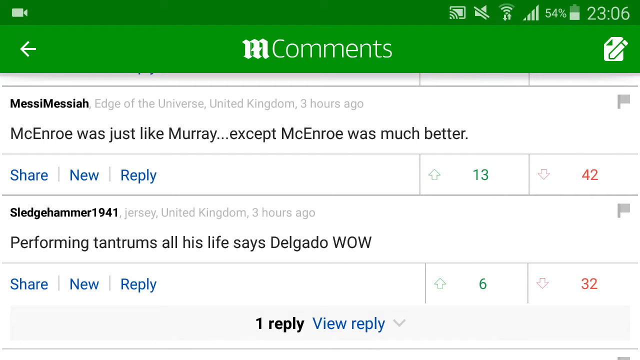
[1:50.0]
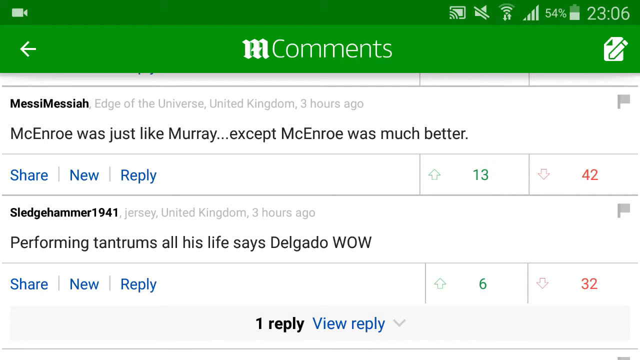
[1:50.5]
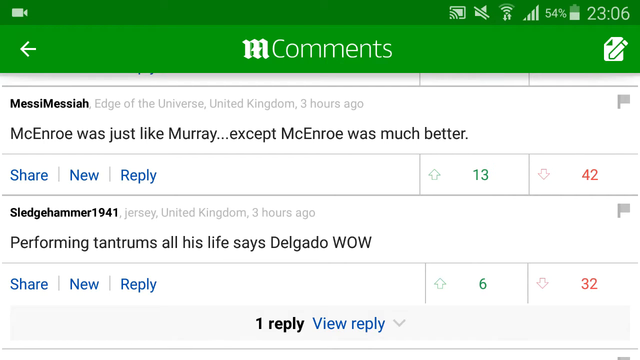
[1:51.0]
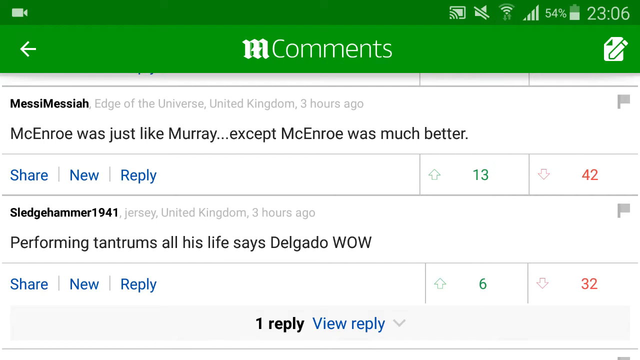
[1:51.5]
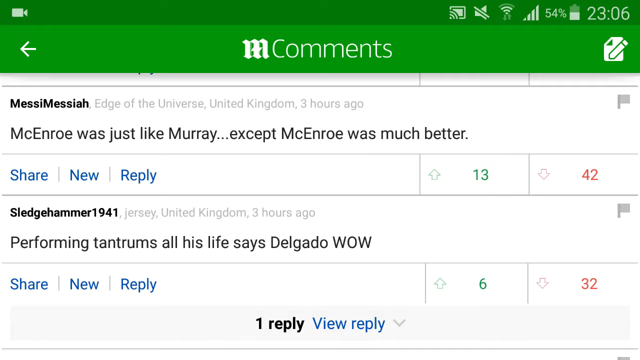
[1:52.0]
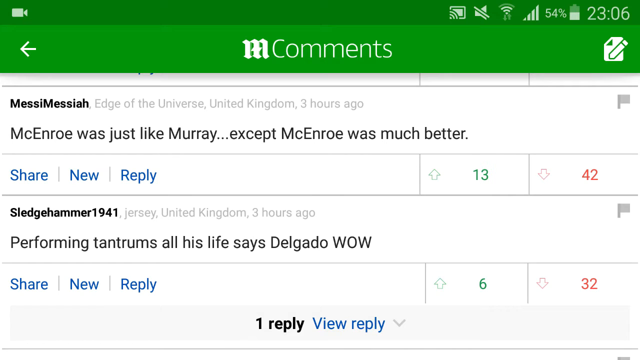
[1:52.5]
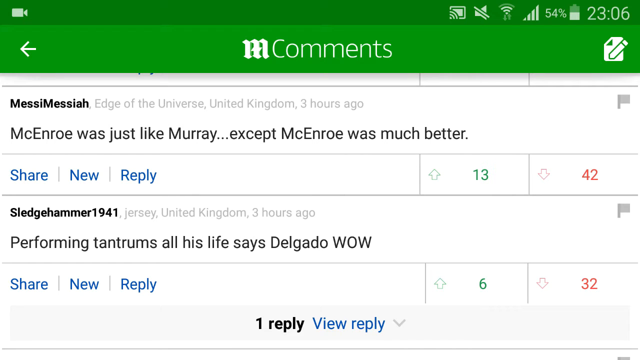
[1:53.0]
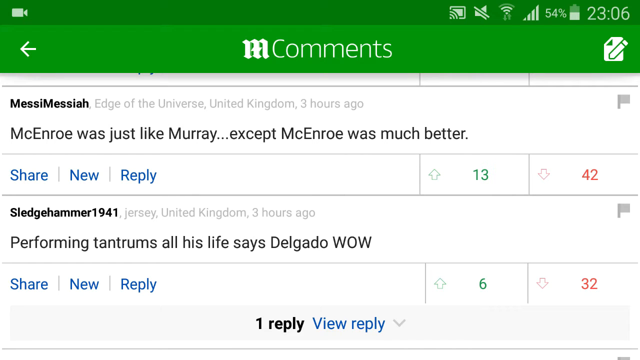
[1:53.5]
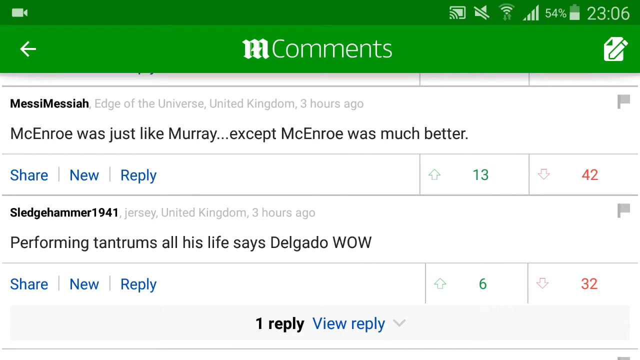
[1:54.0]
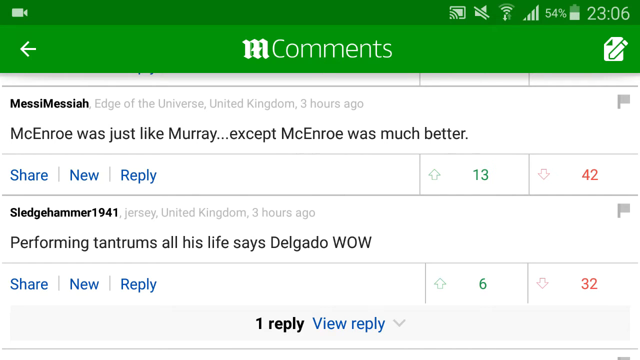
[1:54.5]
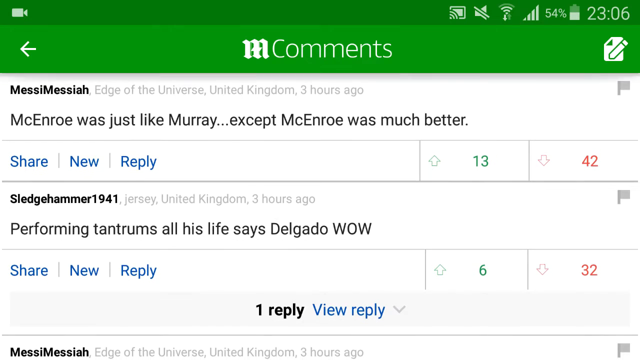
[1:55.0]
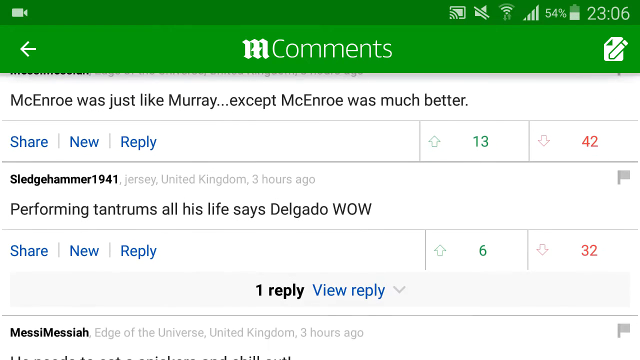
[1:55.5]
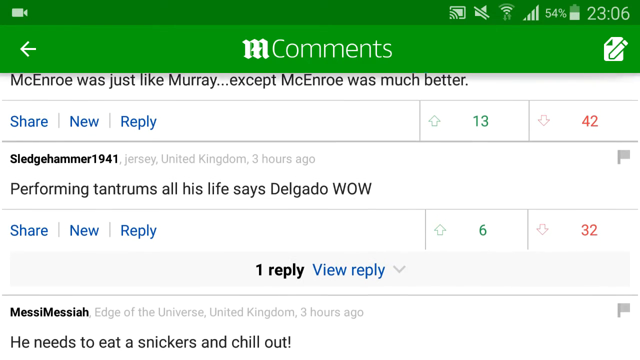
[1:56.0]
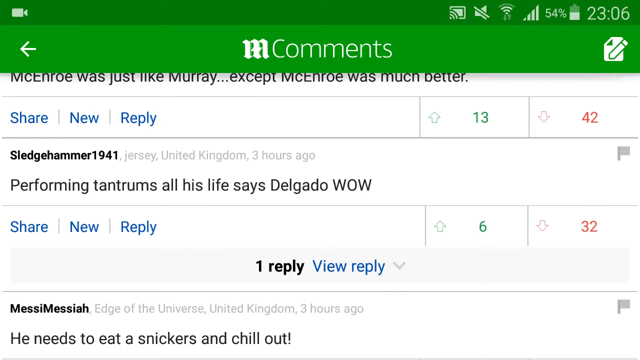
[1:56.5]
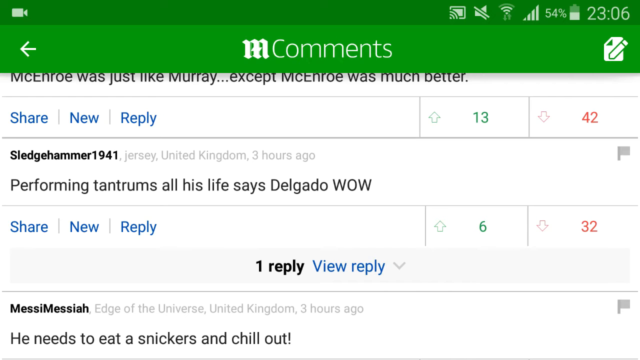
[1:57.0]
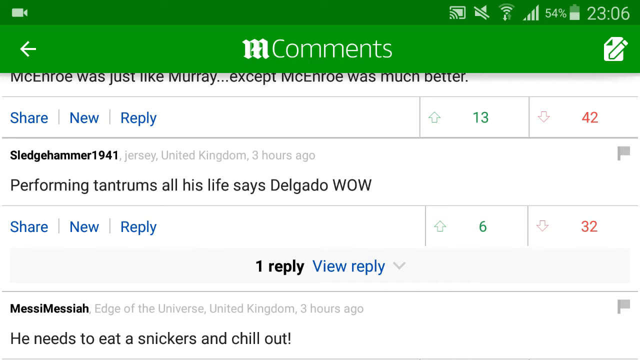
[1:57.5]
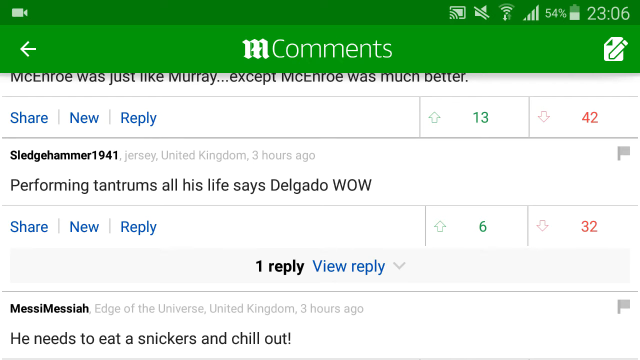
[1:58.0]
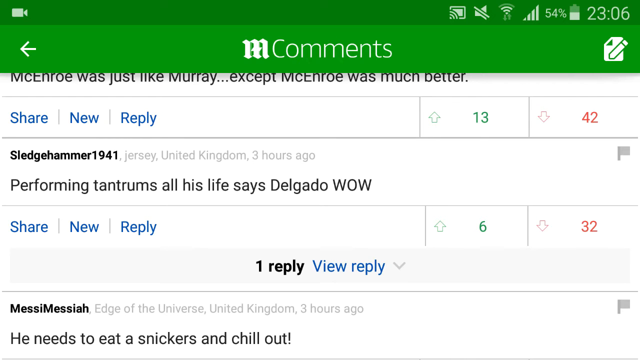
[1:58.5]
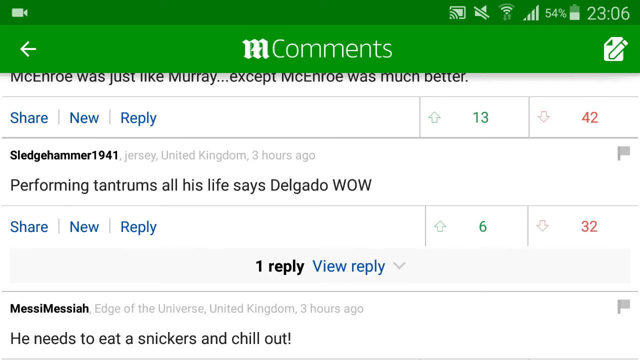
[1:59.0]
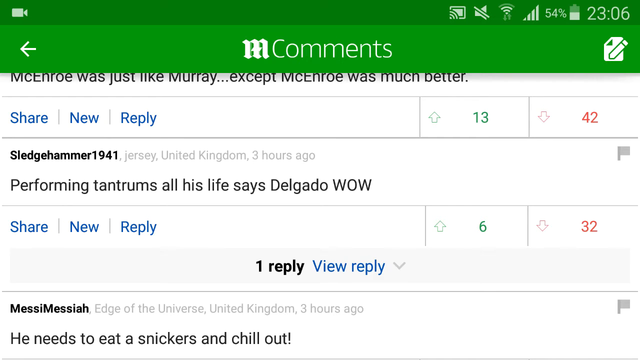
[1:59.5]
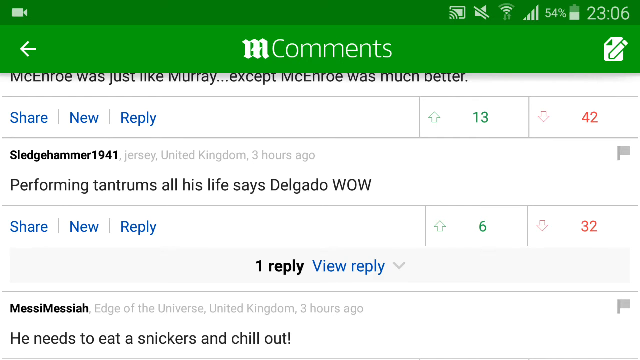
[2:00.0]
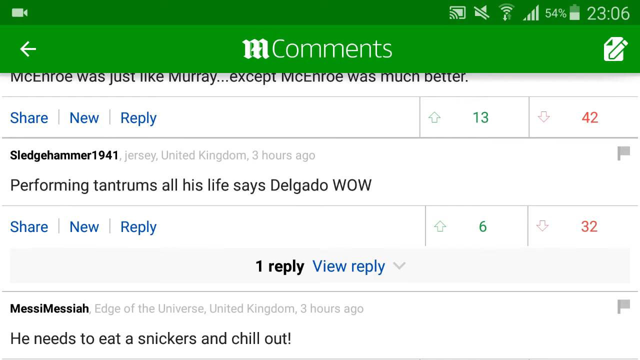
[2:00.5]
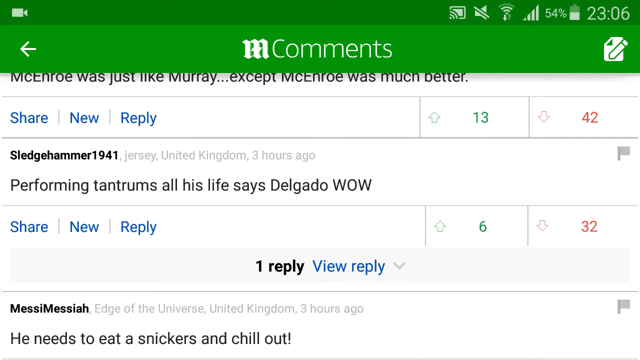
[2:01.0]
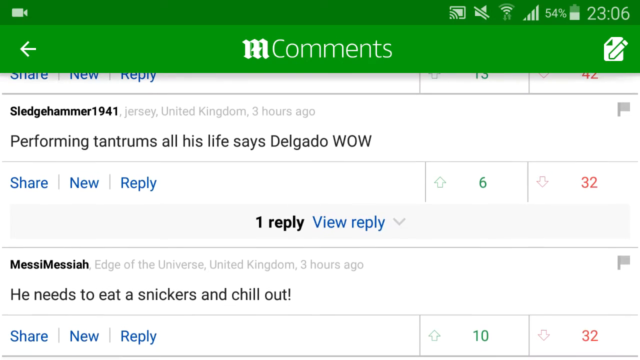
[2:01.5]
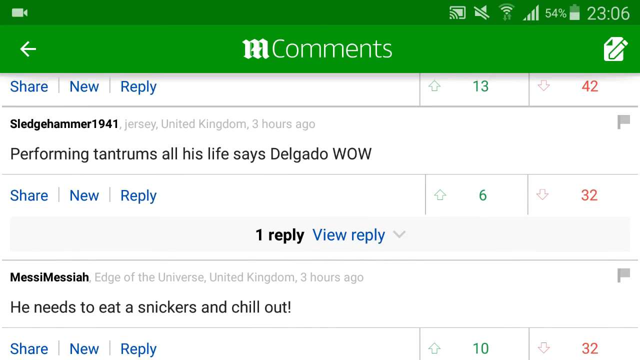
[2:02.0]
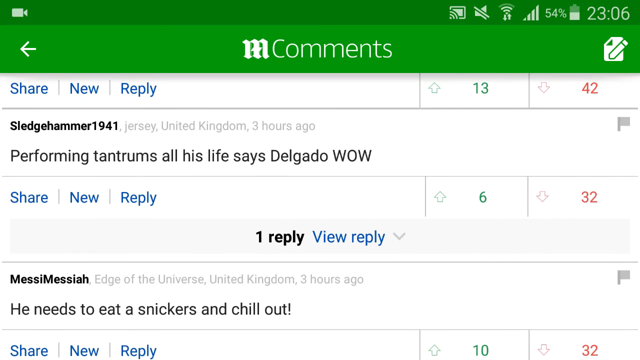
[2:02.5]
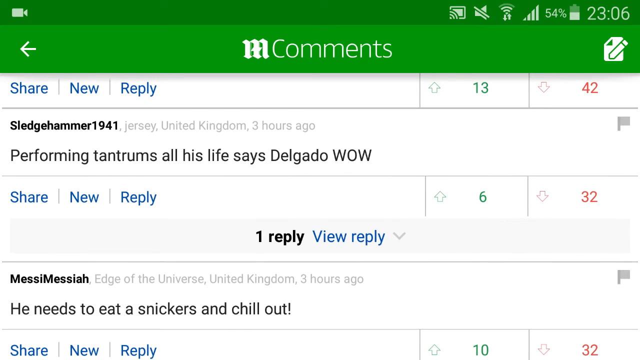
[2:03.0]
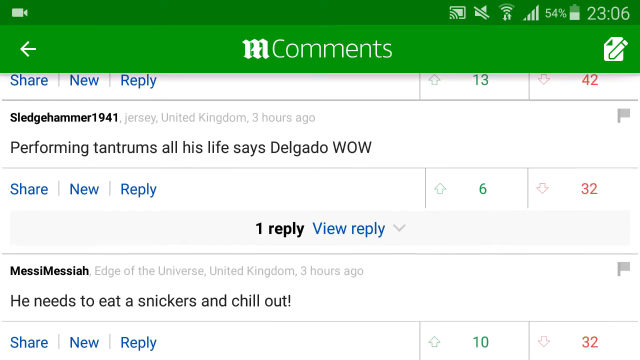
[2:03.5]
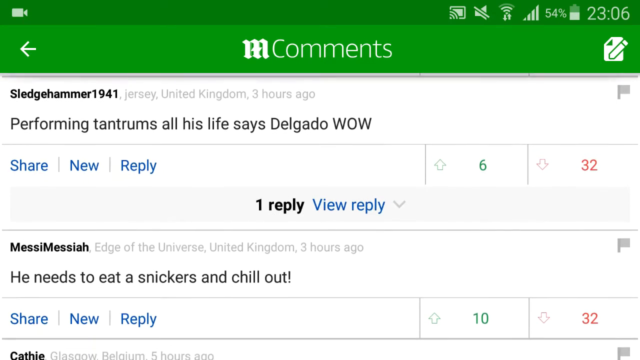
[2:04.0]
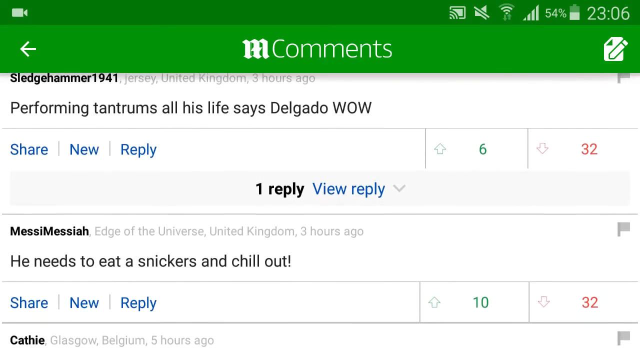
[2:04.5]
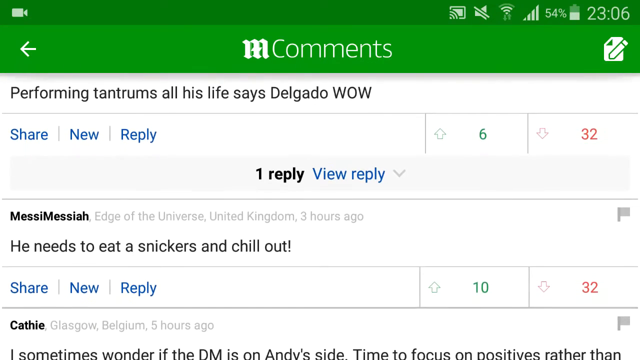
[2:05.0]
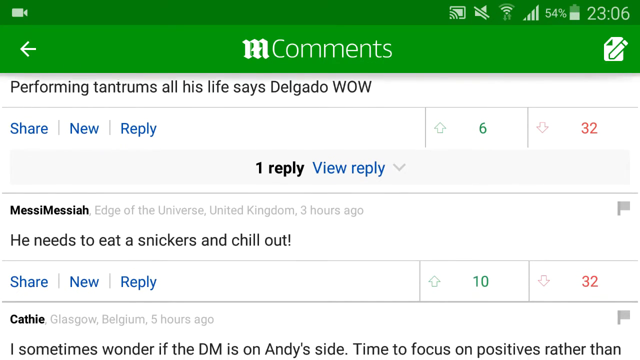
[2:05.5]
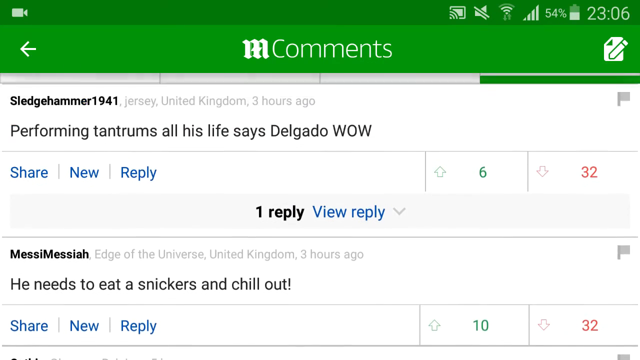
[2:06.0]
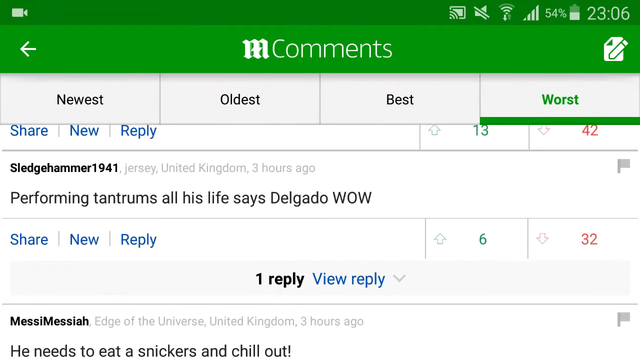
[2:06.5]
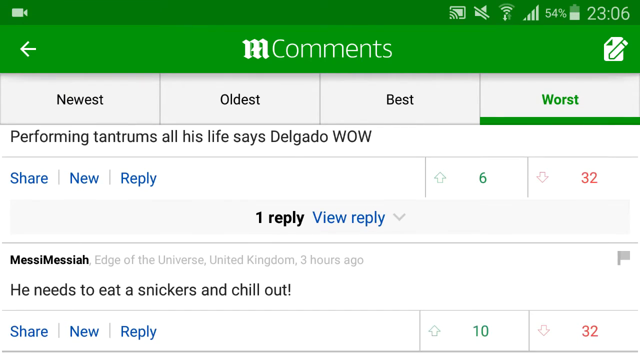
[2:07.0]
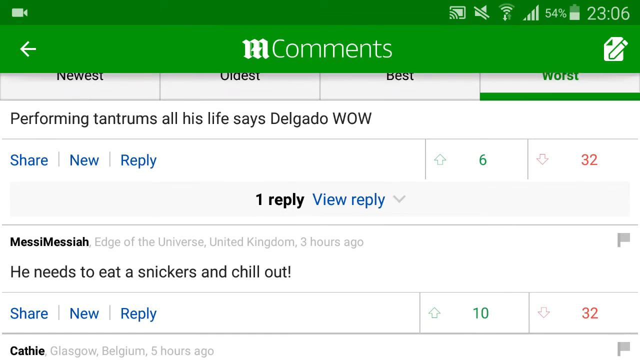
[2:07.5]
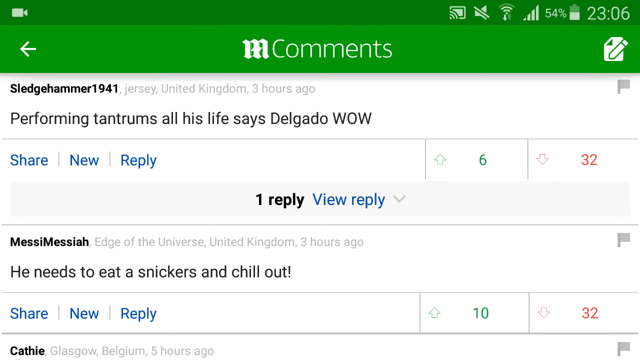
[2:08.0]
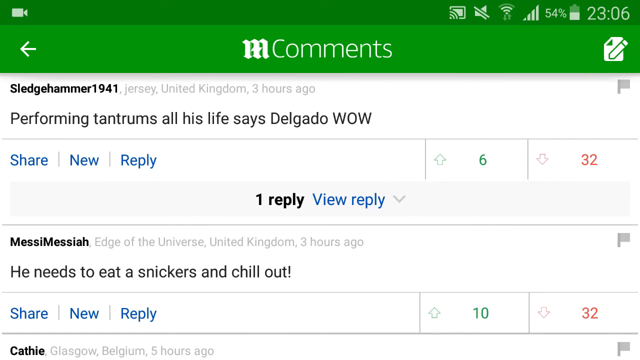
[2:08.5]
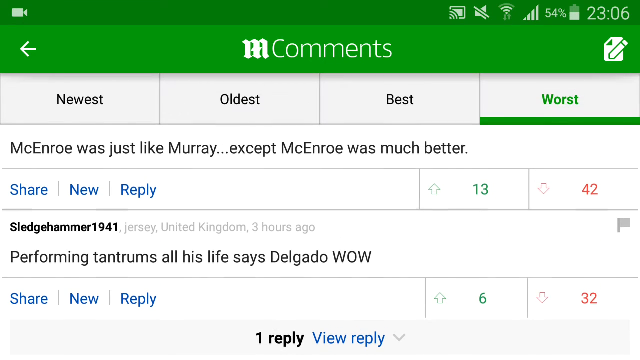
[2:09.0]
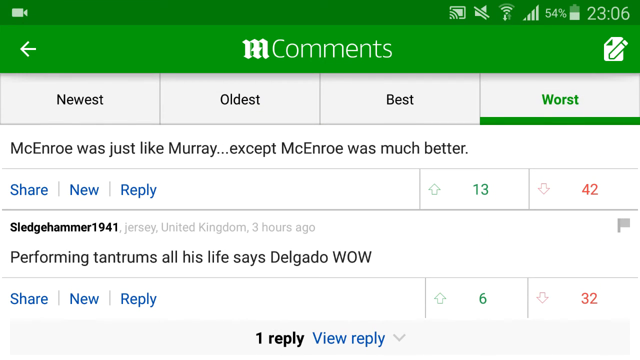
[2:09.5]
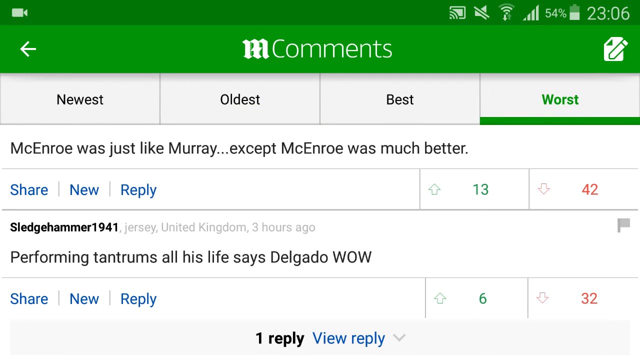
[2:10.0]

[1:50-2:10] Comments about an article on Andy Murray and his tantrums are scrolled through on a mobile device, with Wi-Fi and battery charge shown at the top right of the screen and the time showing 23.06. One comment, from sledgehammer1941, says "performing tantrums all his life says Delgado wow". Scrolling down, another comment says "he needs to eat his knickers and chill out". The view then scrolls back up to the earlier comment, and a comment above it says "McEnroe was just like Murray, except McEnroe was much better". The comments are filtered by the worst option, and all are negative. Across the top of the screen there seems to be a green bar, and in the top left corner is a sort of video camera icon, possibly indicating the screen is being recorded.